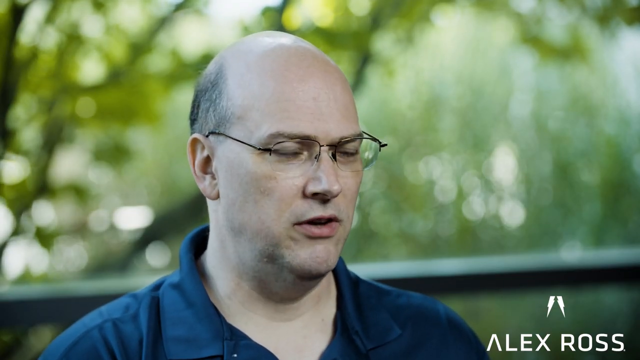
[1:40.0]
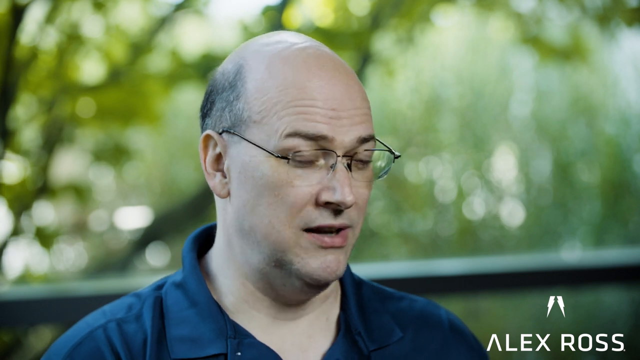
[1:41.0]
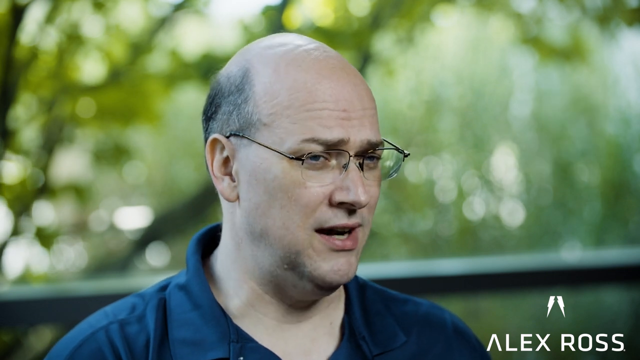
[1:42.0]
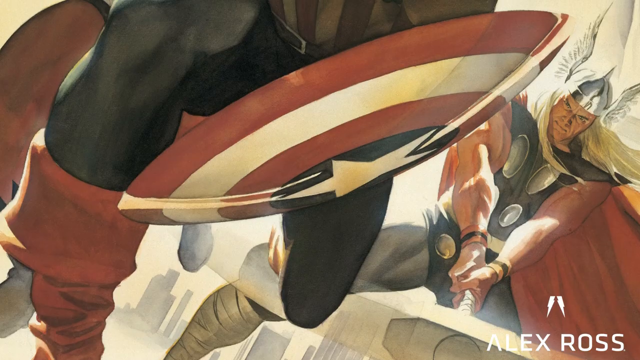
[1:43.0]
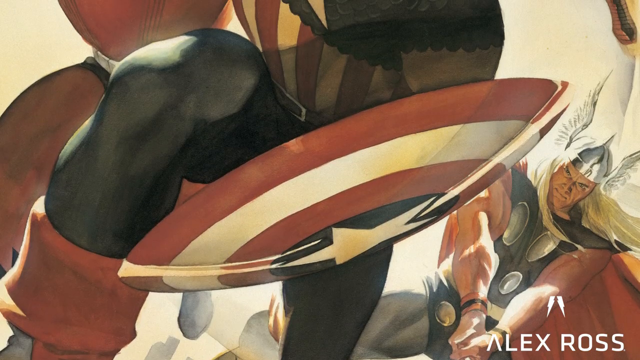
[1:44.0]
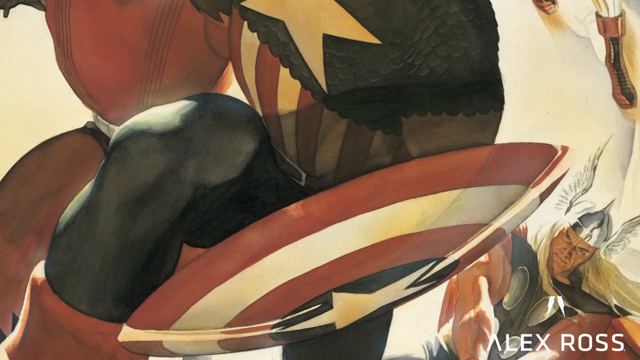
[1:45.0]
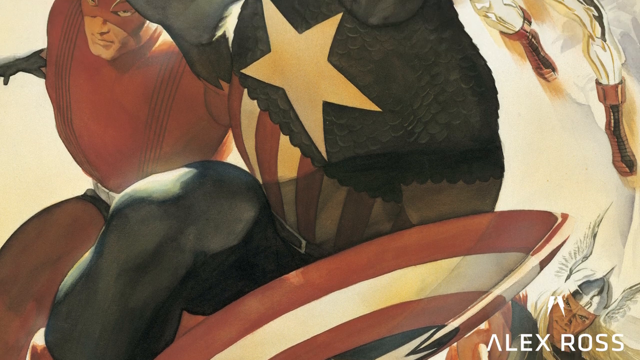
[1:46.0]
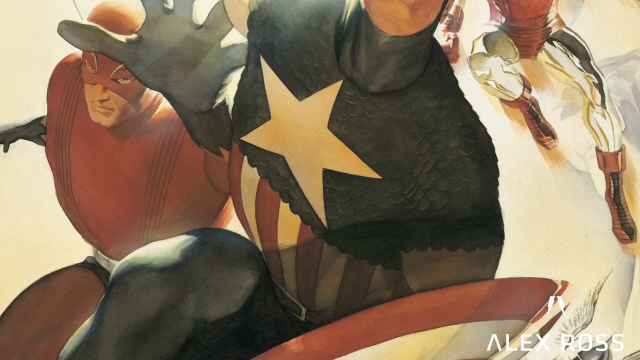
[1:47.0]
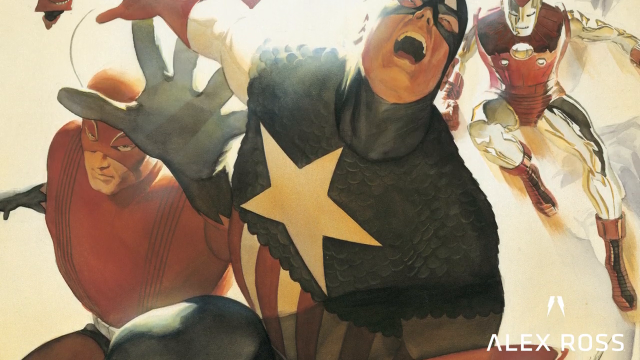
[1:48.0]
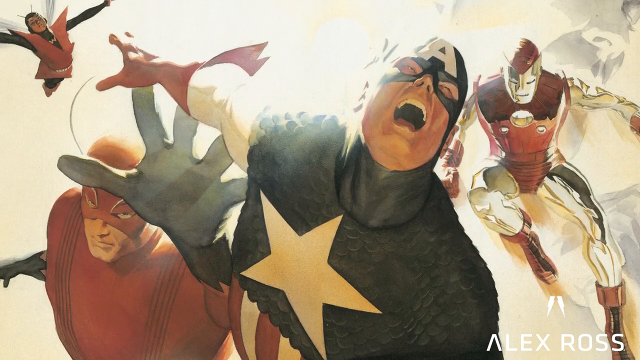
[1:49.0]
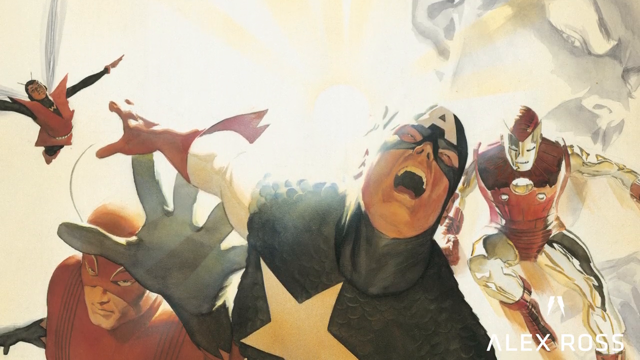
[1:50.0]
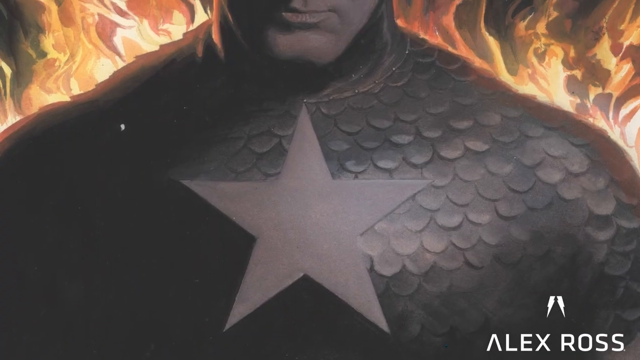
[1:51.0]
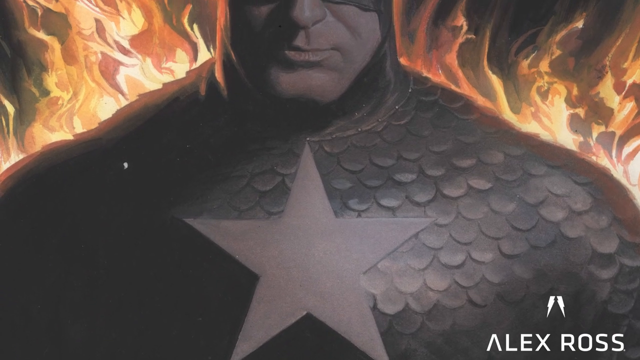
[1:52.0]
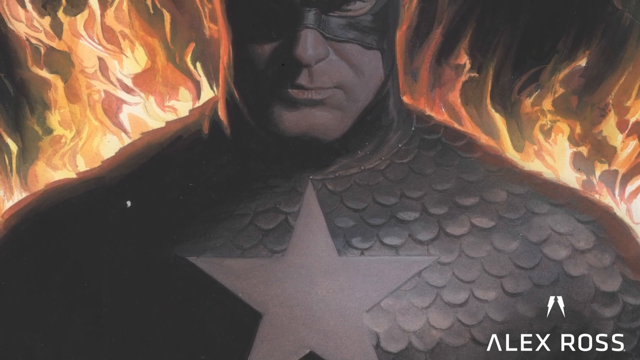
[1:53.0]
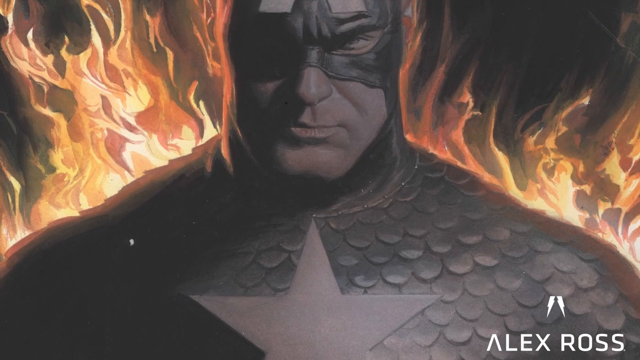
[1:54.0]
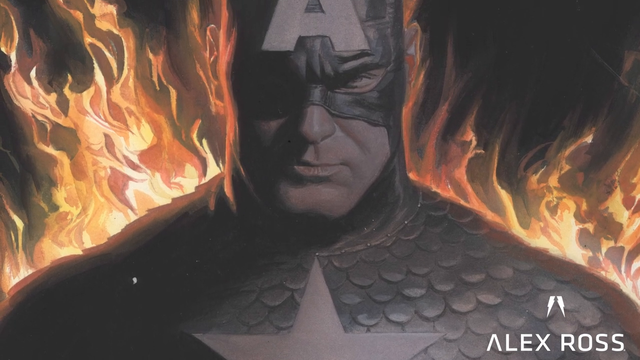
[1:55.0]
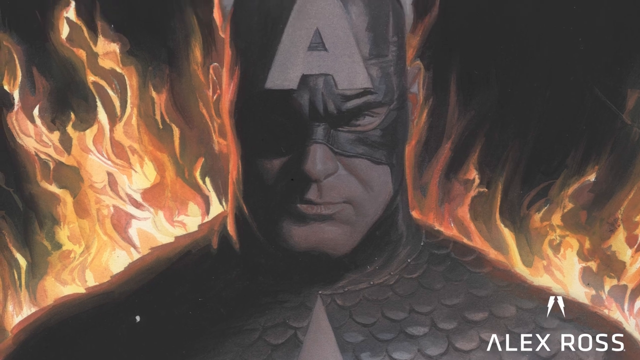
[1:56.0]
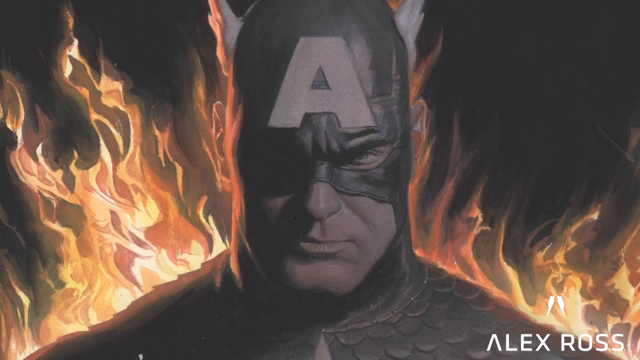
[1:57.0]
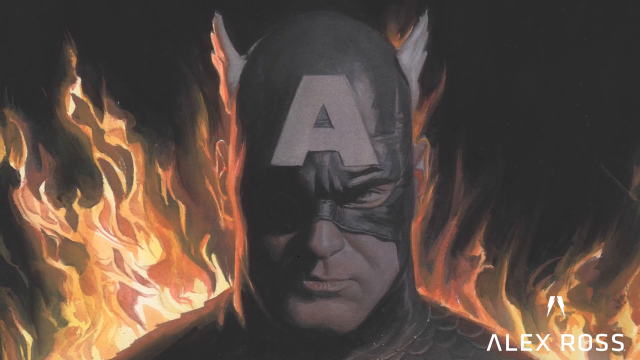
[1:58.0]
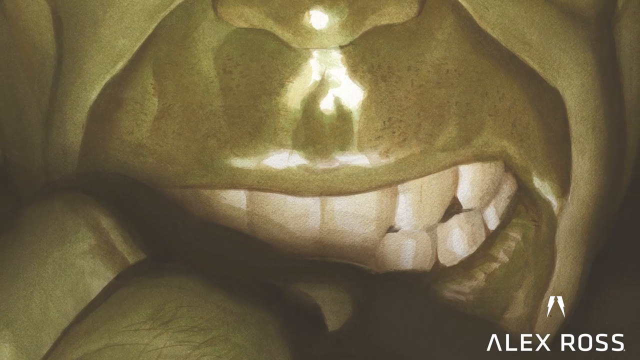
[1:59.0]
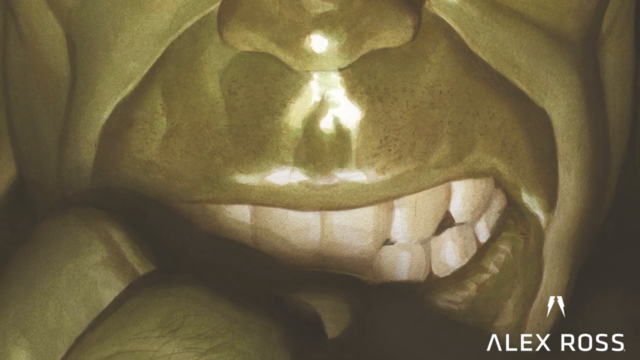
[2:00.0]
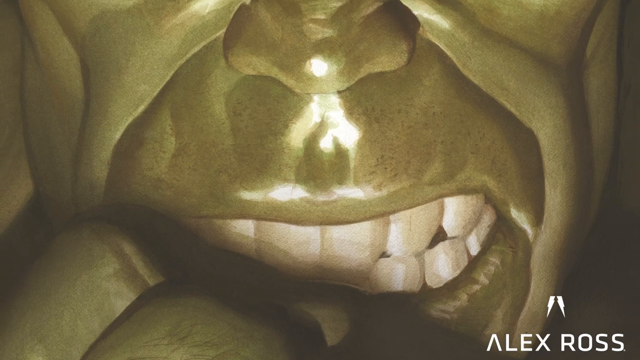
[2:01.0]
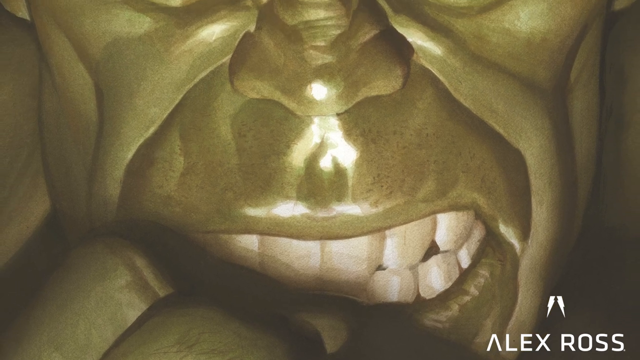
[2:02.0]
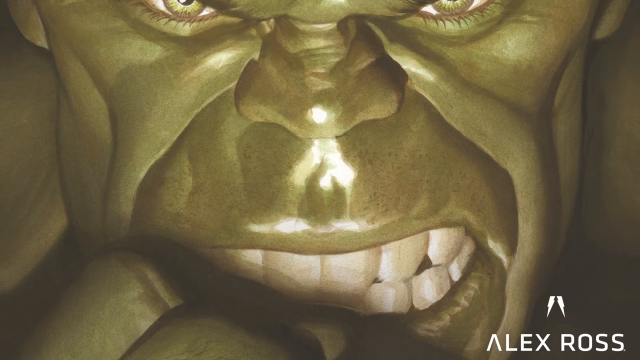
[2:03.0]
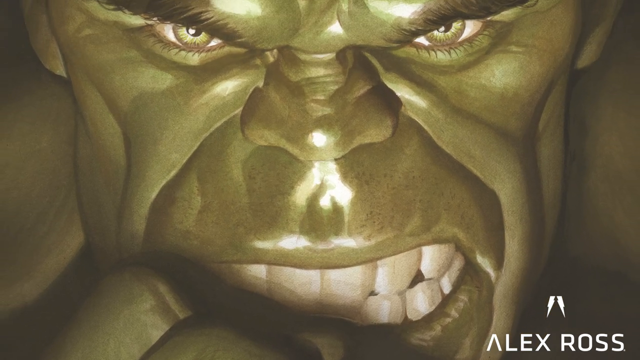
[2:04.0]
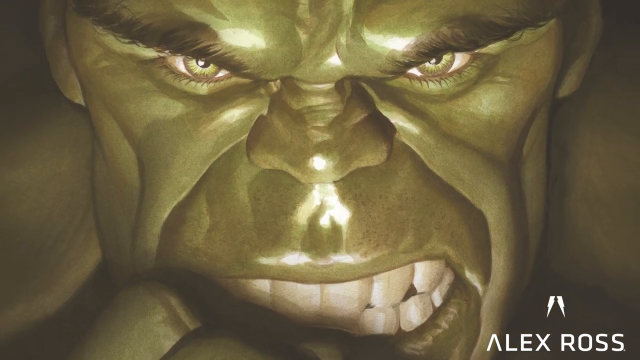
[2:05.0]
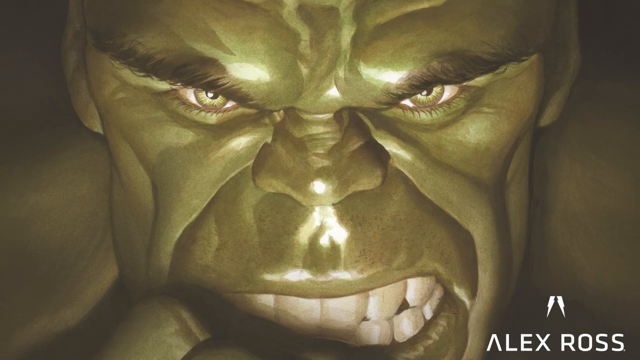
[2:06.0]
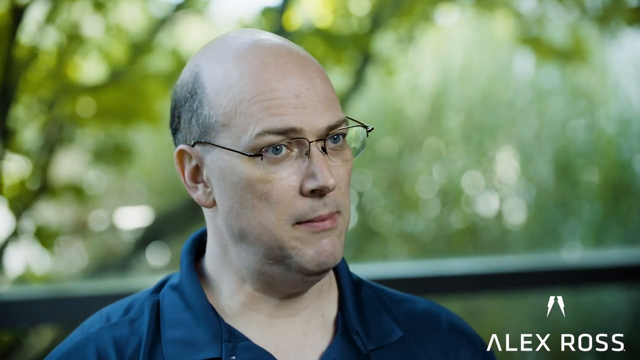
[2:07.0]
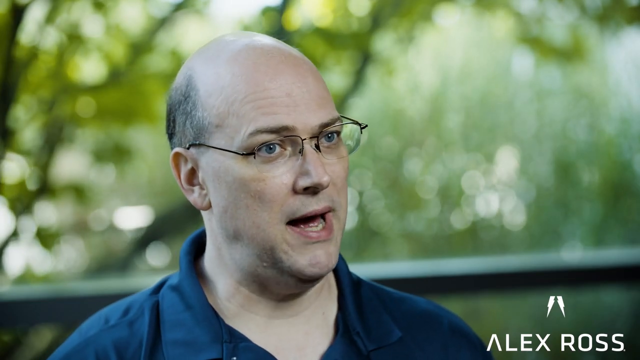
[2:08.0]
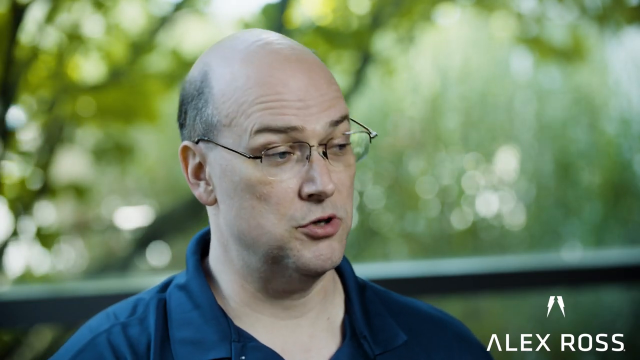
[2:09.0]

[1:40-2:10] The balding man, who has some hair just at the bottom of his head, wears glasses with a black frame across the top that are wire-rimmed throughout. Behind him is a horizontal line with faded-out trees behind that. He speaks while looking slightly off to the right-hand side of the camera, wearing a blue polo shirt. Next come Captain America's shield and the white star on Captain America's chest, with Captain America looking up with his mouth open. Then a figure appears in a scale-type suit with a large white star on the front and a large capital A on the mask on top, with flames behind. A close-up follows of snarling teeth and green skin, showing the eyes of Hulk, with reflections on his skin, and the words "Alex Ross" in the bottom right-hand corner. The balding man with glasses is then seen speaking to the camera again, with trees behind him and a horizontal line beneath them.